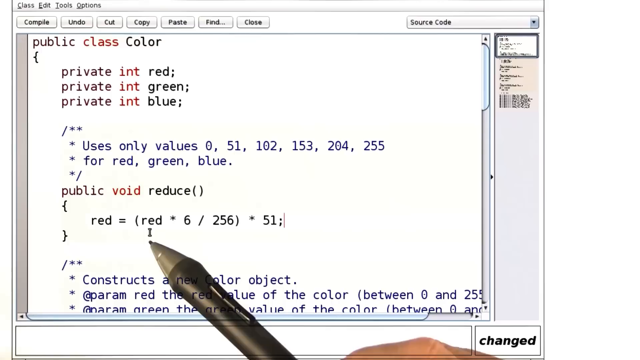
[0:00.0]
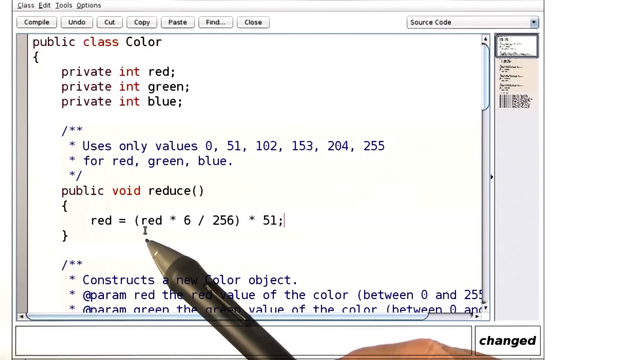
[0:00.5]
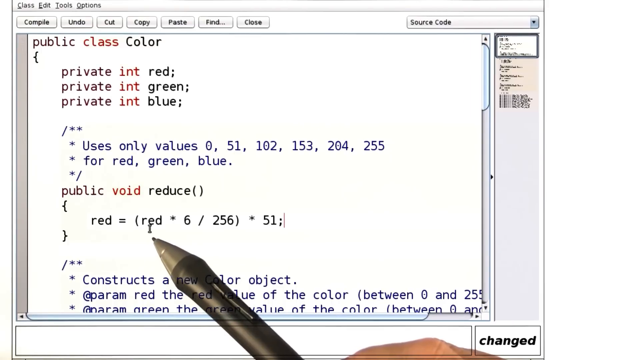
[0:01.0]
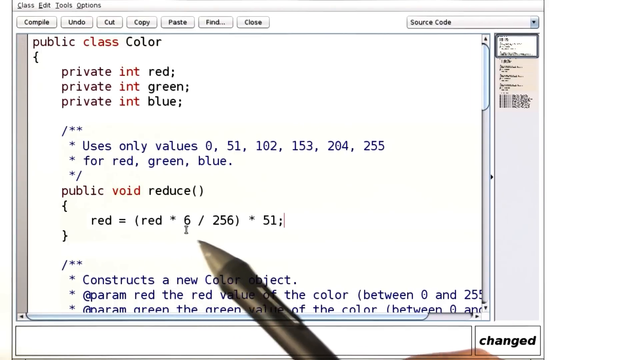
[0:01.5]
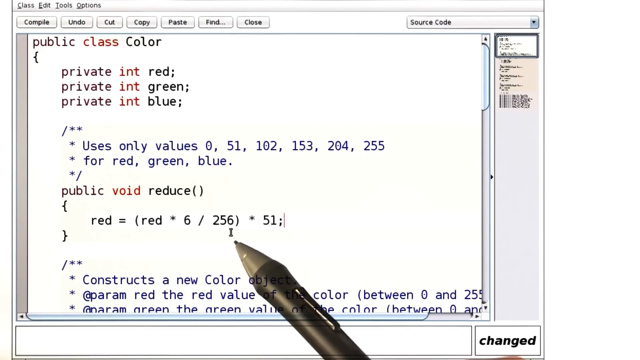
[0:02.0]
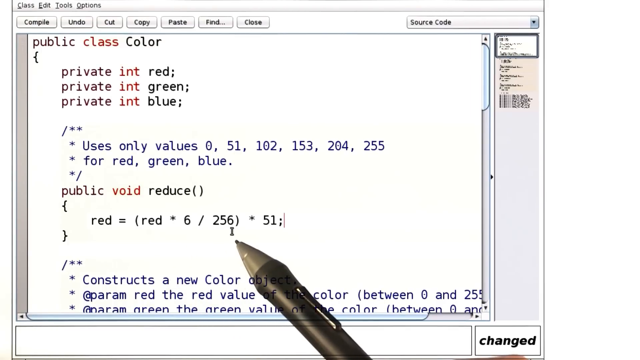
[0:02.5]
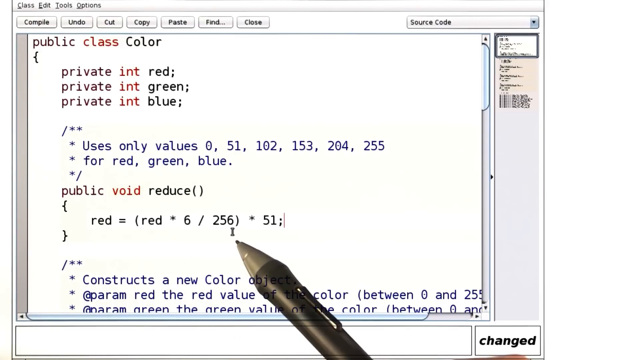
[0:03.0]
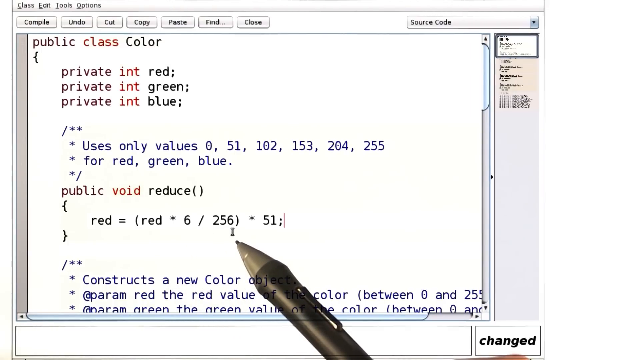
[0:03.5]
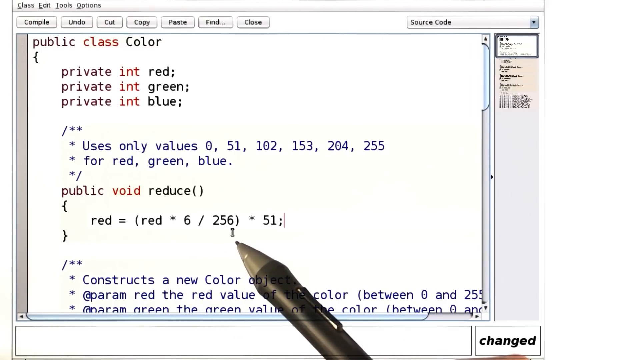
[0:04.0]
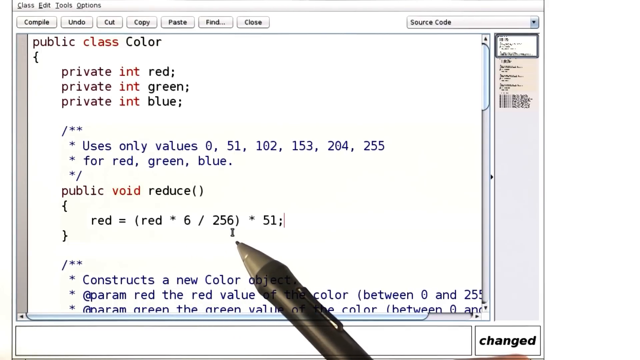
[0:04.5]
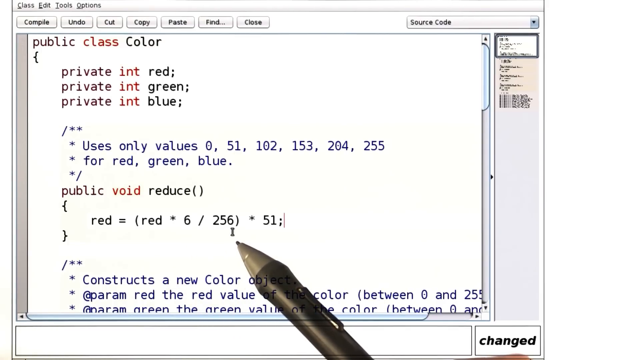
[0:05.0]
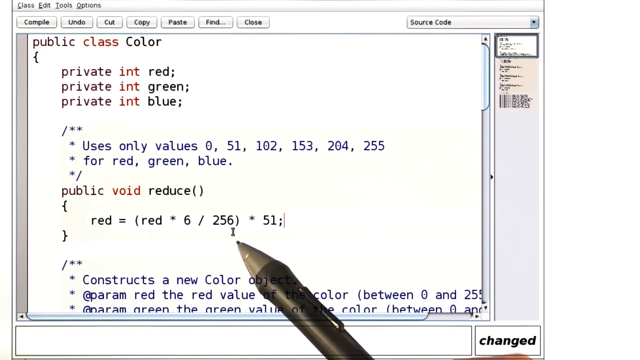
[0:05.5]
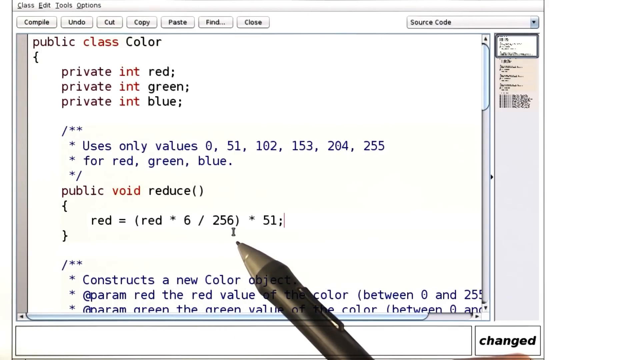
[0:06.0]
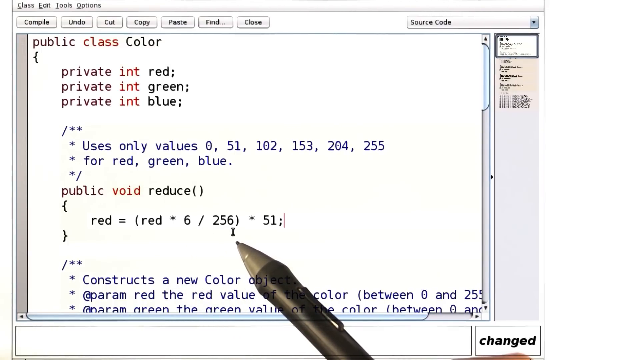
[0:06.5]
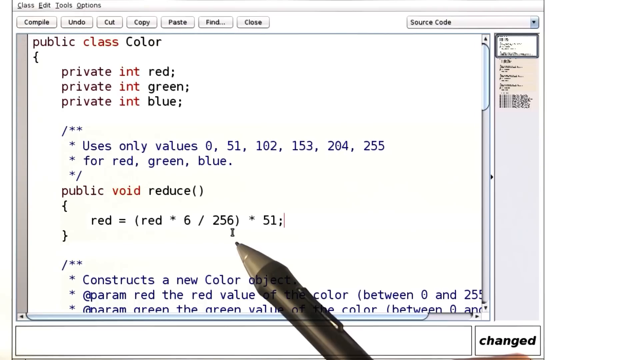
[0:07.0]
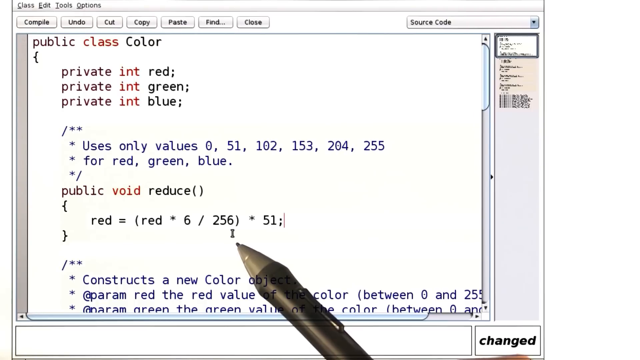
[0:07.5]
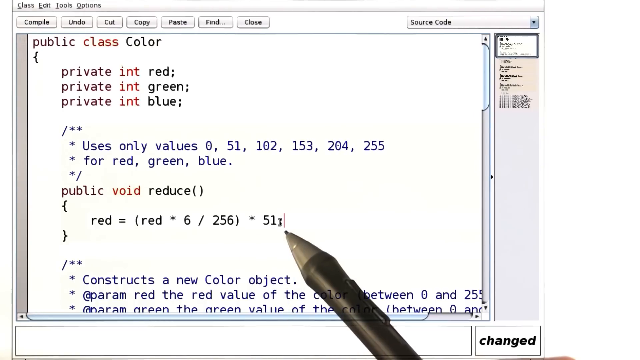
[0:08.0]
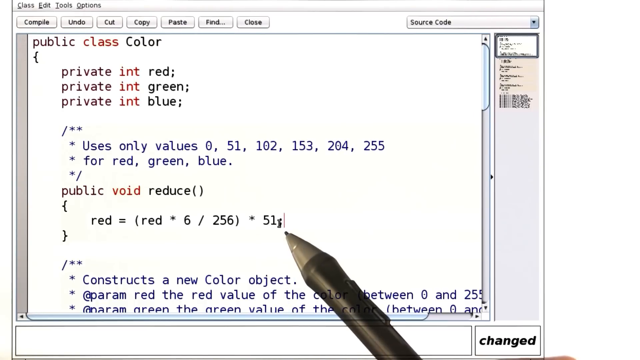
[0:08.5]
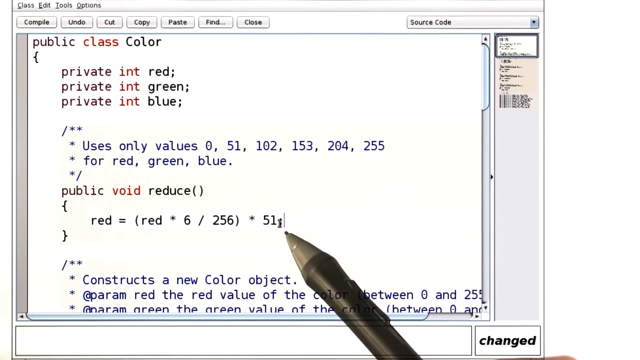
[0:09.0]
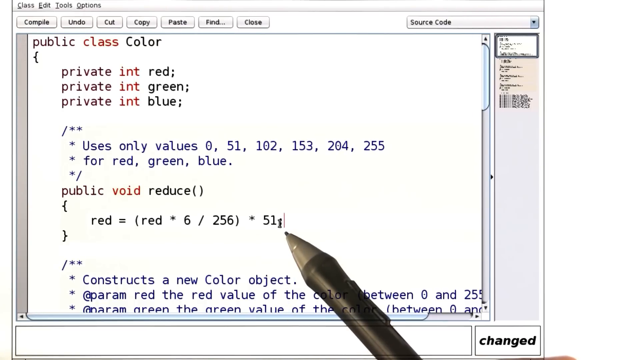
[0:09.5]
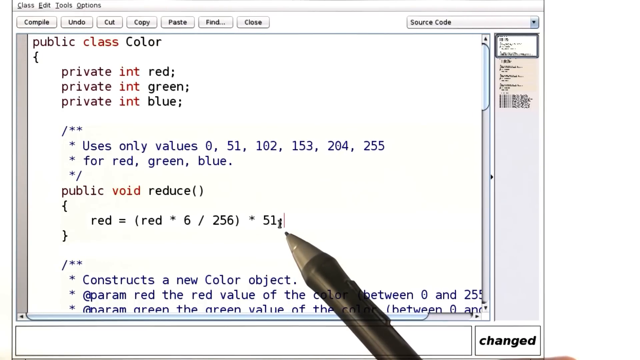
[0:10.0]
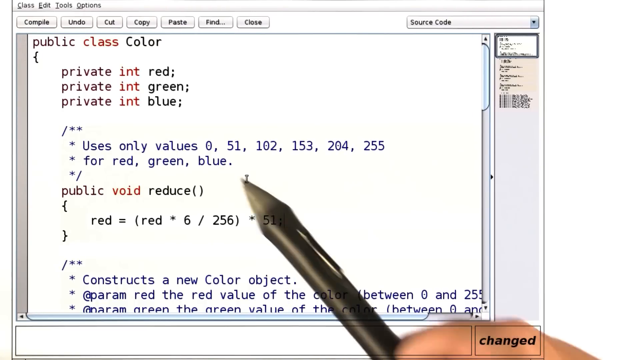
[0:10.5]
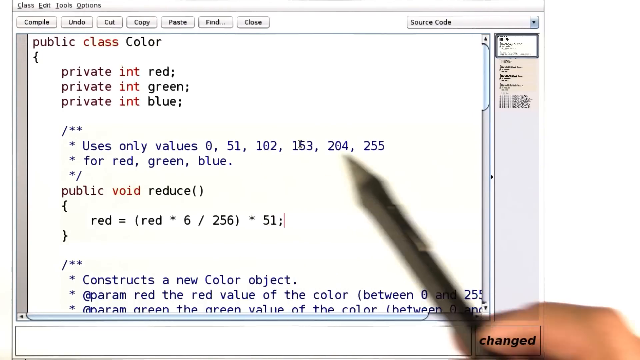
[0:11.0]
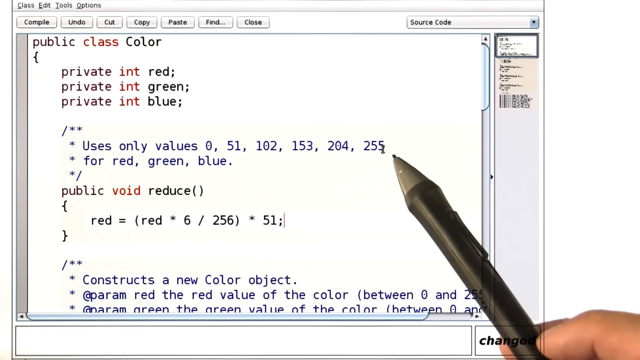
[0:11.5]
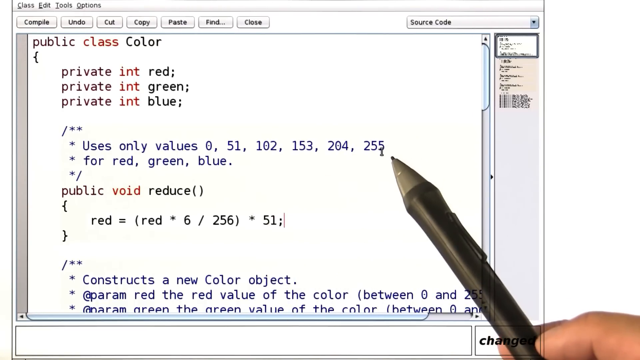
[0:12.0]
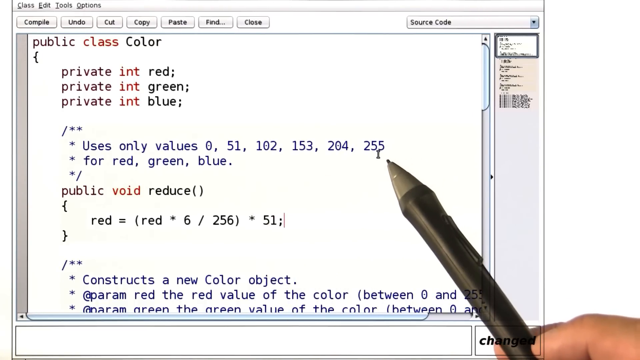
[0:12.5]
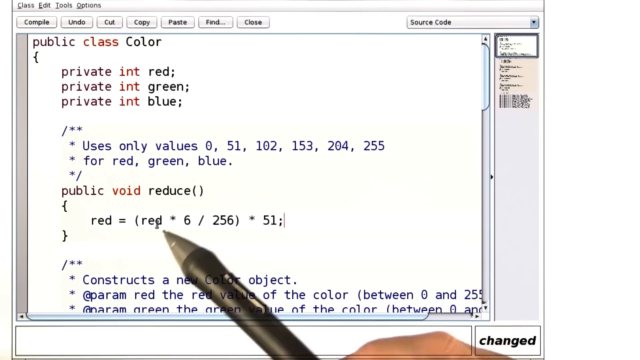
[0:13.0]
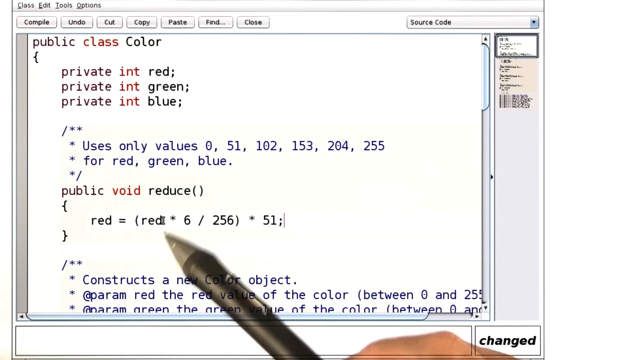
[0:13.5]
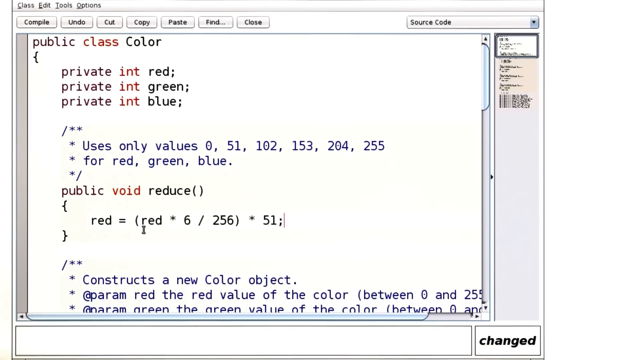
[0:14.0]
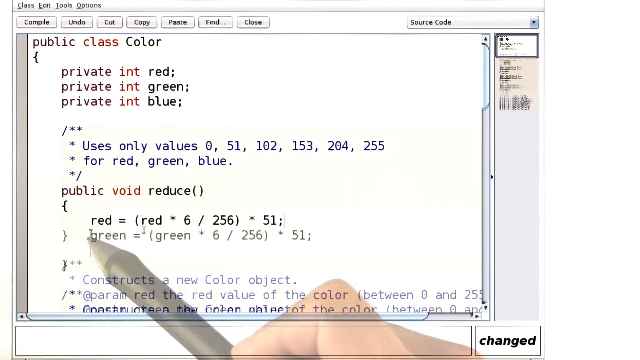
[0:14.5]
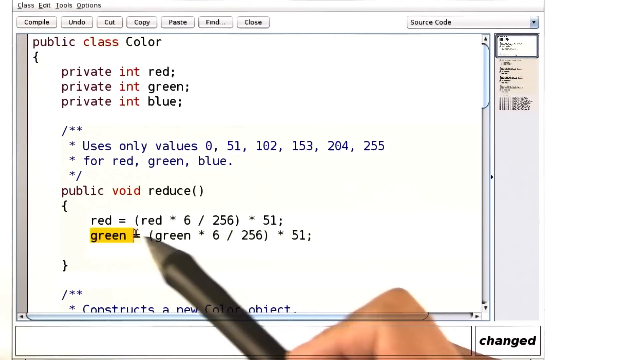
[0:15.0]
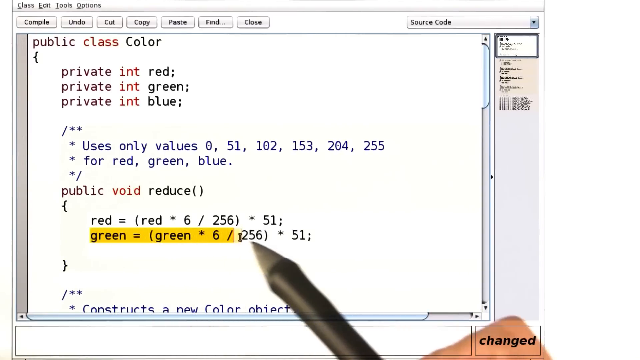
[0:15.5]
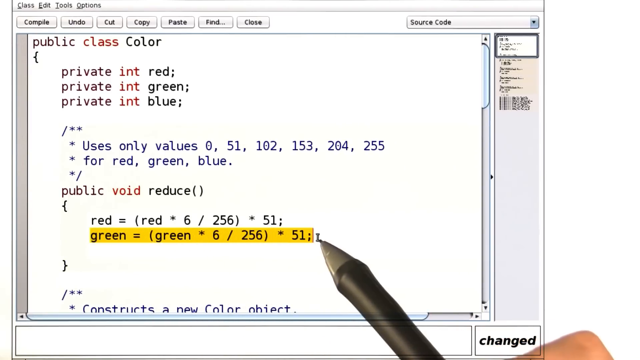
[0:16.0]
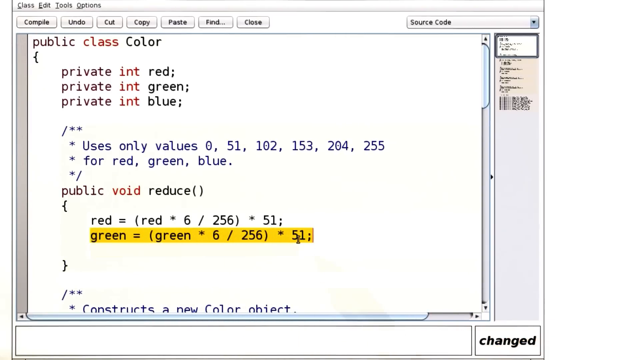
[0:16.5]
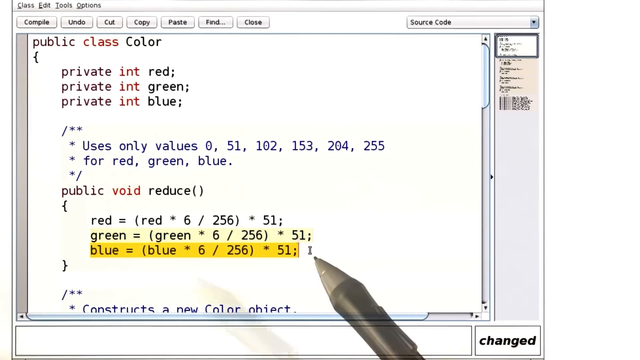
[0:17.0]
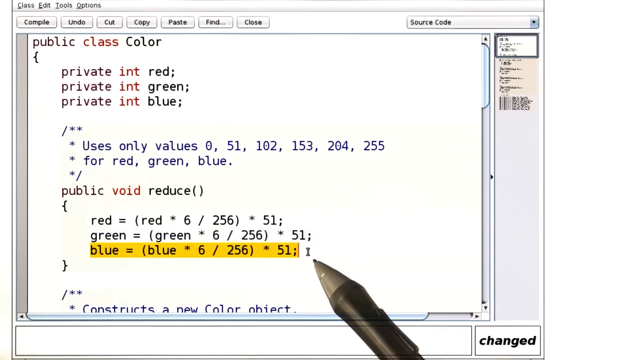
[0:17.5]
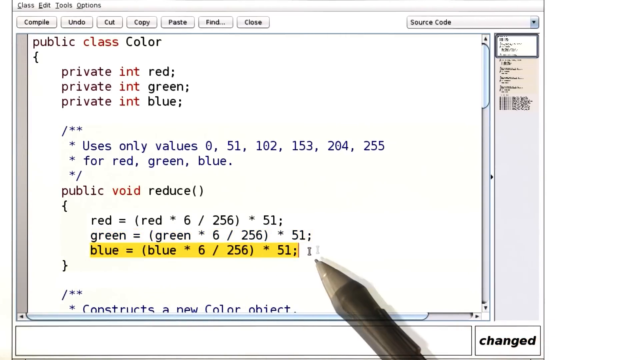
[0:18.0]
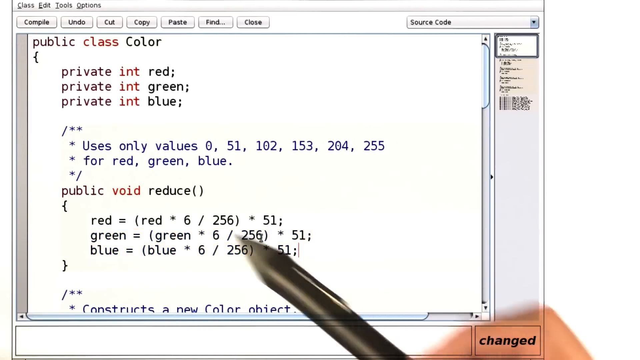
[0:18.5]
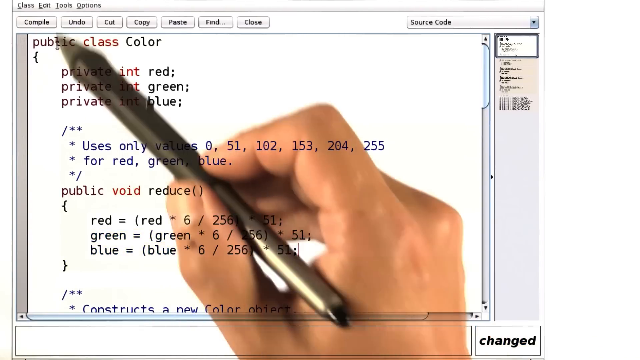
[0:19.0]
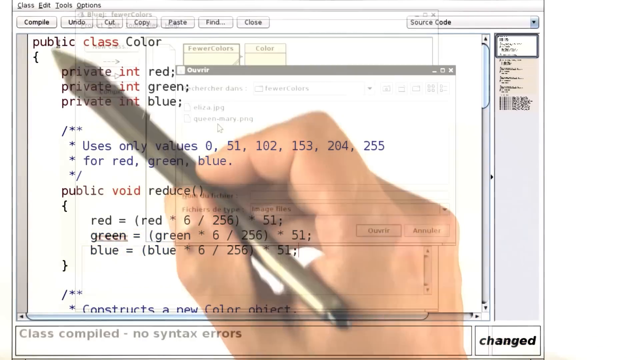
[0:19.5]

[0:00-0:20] A person is using what is possibly some type of pen to change source code on the screen. The document they have pulled up appears to be titled "public class color", and "source code" appears in the top right-hand corner. They have an uppercase I and move it around, first trying to move it behind the 51 and then seemingly behind the 255. They then highlight the green and then the blue, apparently trying to move it around and possibly revise it in the document. They do not seem to be successful, as it does not go where they want, but they keep moving it around in an attempt to amend what they already have.